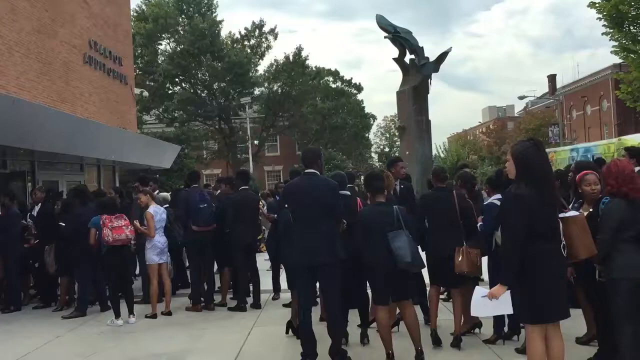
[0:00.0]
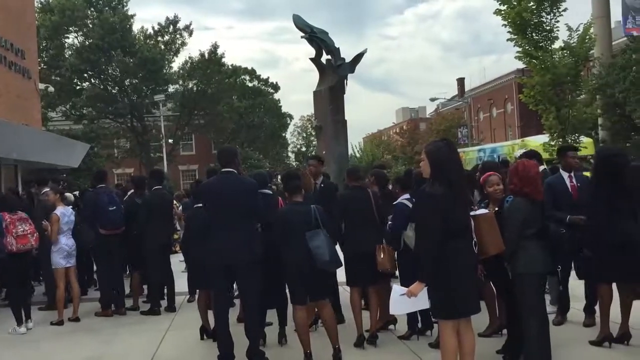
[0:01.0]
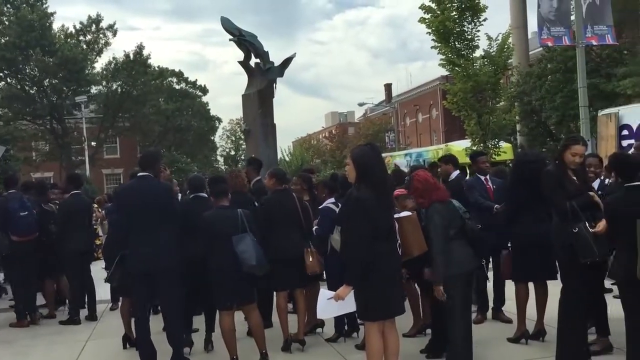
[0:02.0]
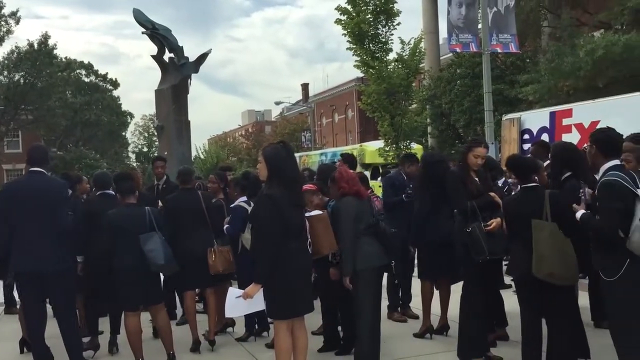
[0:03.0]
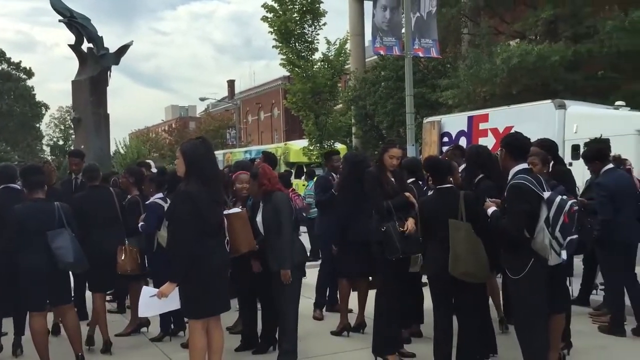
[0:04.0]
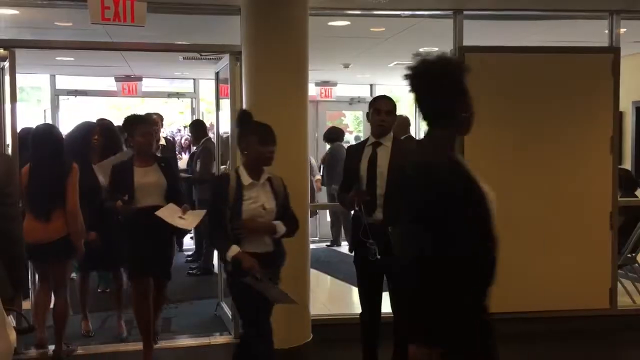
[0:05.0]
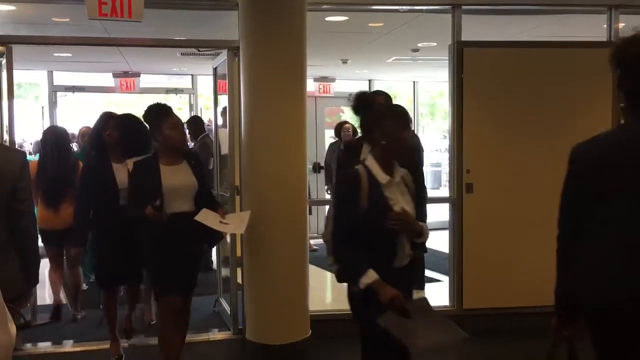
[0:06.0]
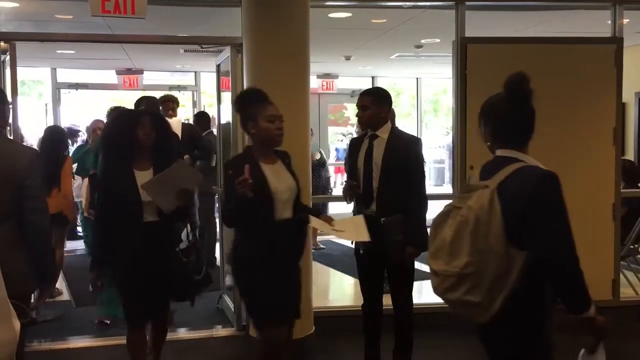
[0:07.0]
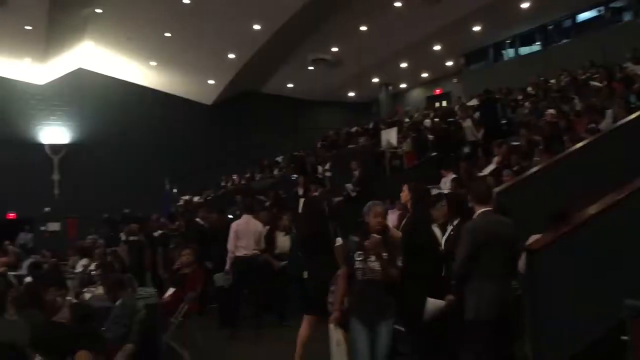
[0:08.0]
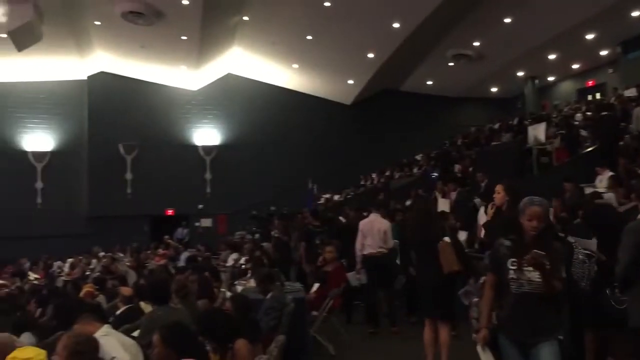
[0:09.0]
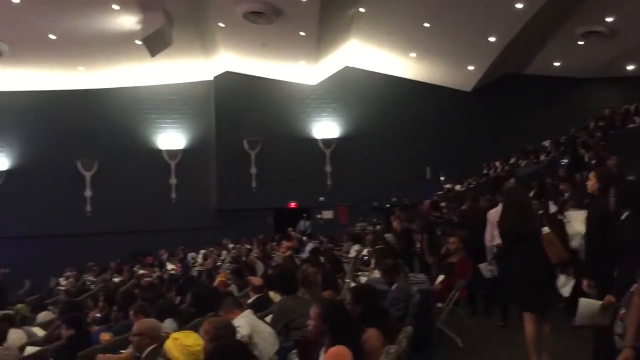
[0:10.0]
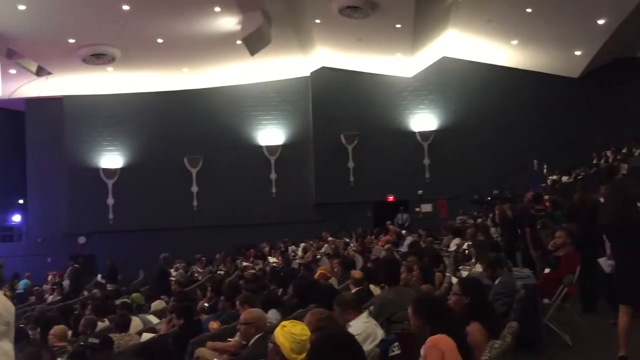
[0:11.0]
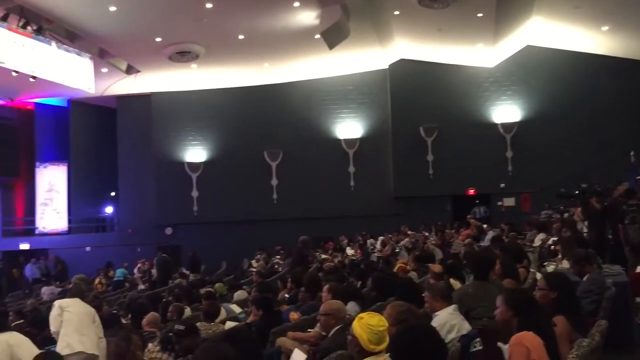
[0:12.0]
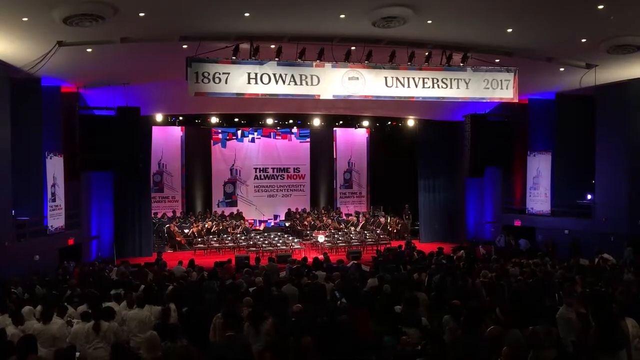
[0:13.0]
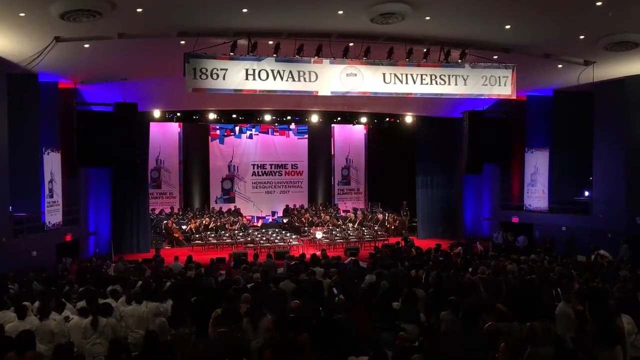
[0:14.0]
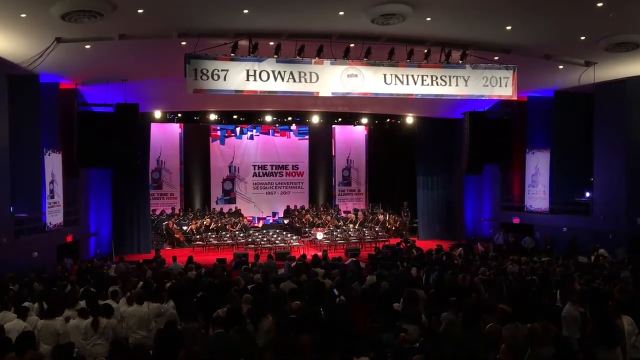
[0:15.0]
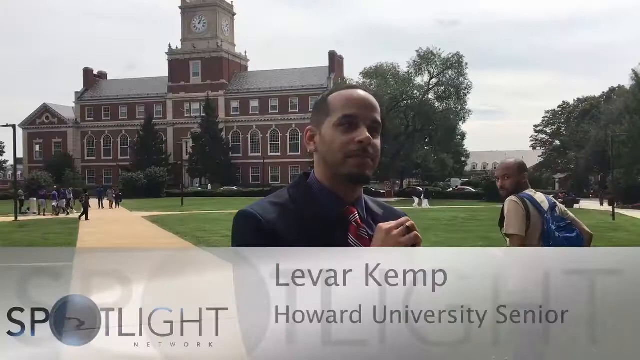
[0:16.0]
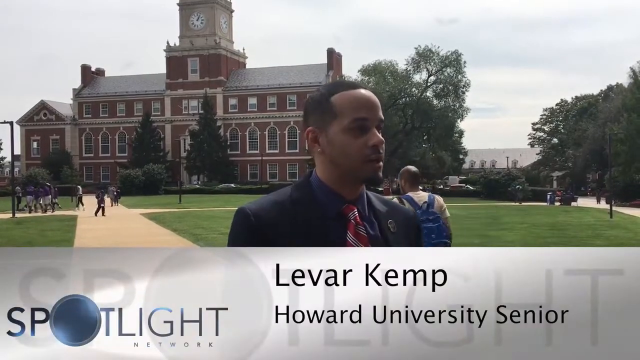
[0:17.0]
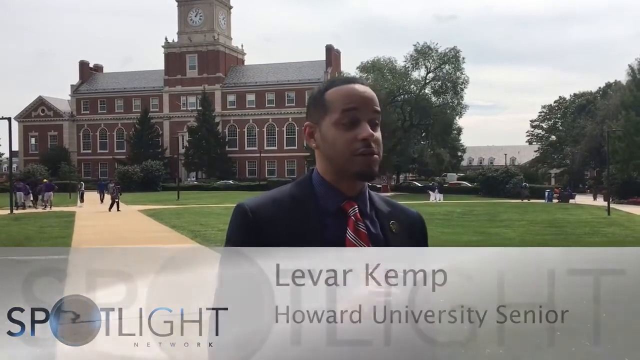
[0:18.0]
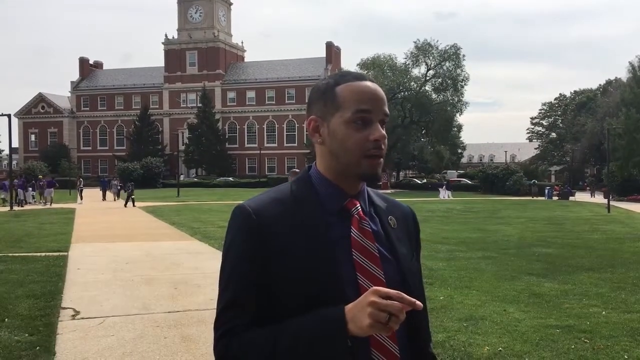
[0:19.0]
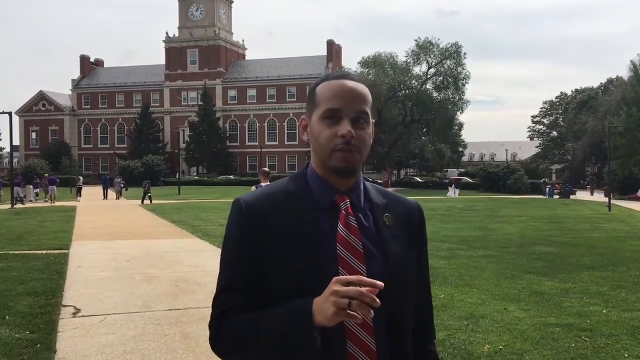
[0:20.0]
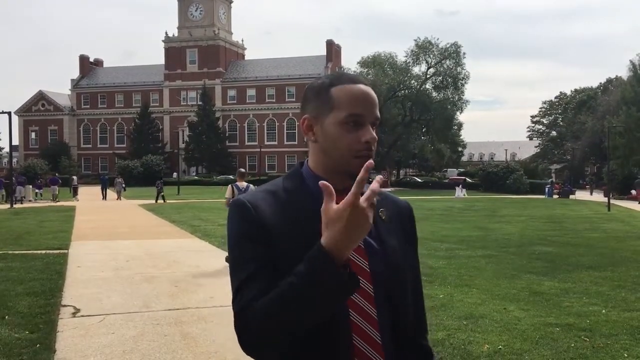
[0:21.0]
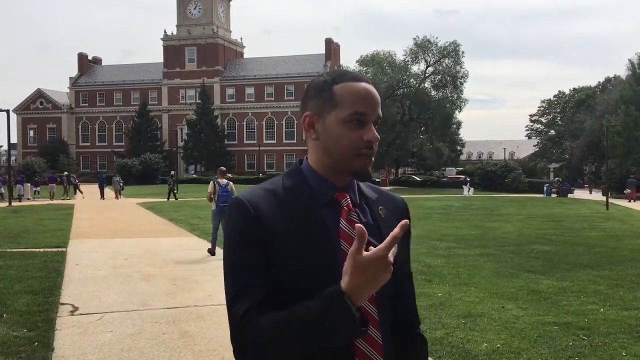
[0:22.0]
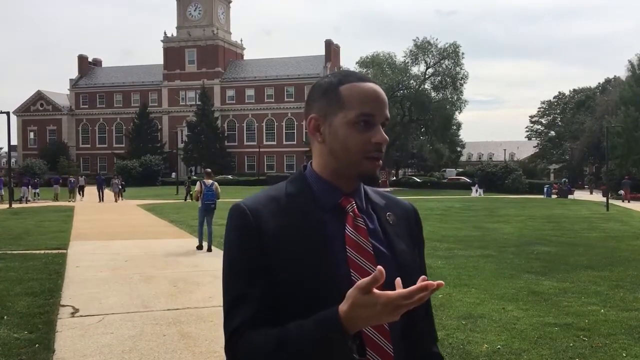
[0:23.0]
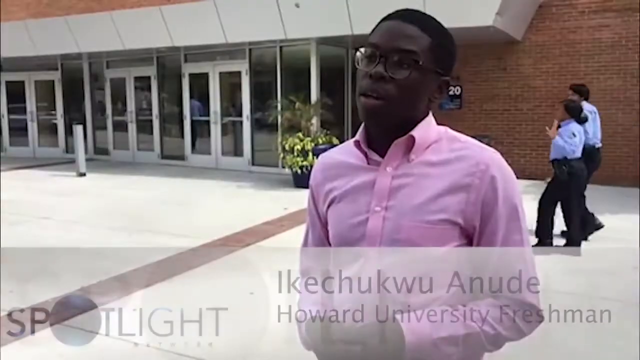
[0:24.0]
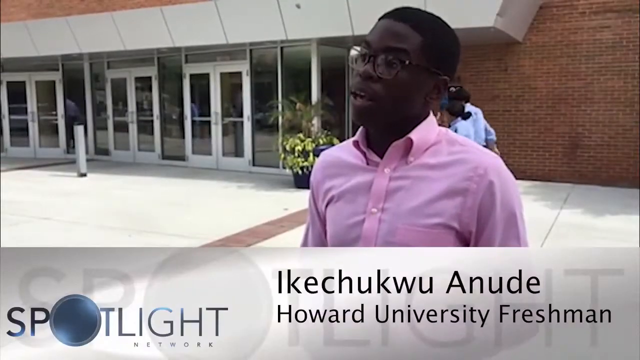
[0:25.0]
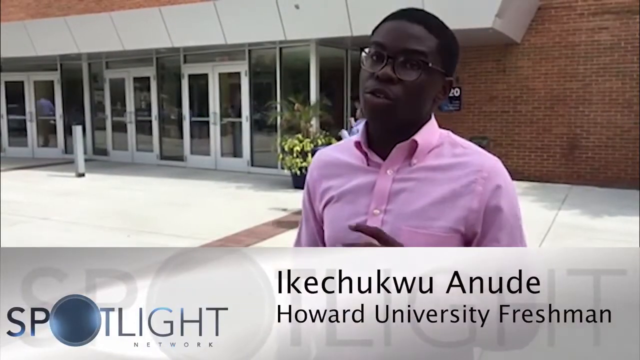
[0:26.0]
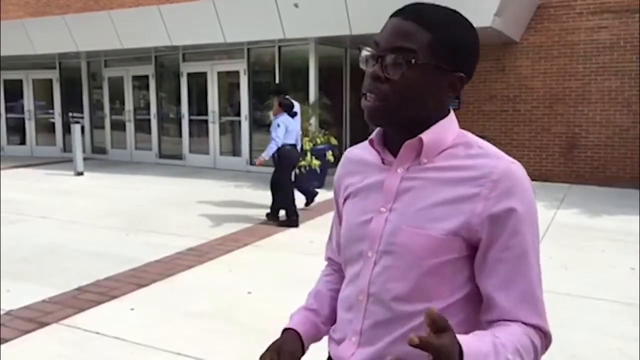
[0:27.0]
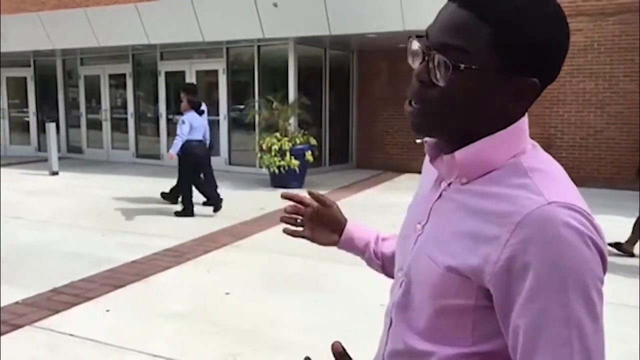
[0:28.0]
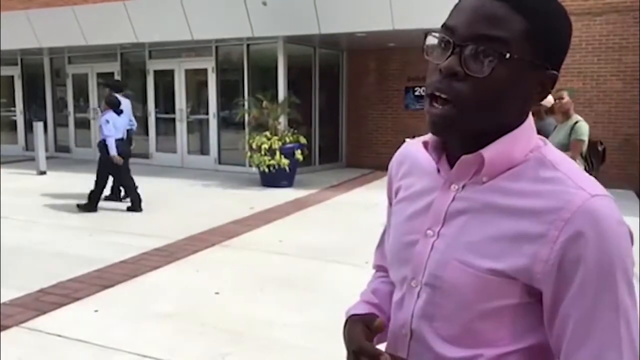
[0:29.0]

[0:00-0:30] The front of a building, apparently an auditorium, is shown. Inside, a sign reads "Howard University," so the setting seems to be the Howard University campus. The crowd is predominantly African-American, and most people are in fairly formal dress. People are interviewed outside what appears to be the auditorium, at a gathering that is perhaps celebrating some kind of anniversary for Howard University. At first a very large group is gathered outside, mostly in formal business attire, and some of them look to be students. They are gathered around a memorial in the center, out in front of the building. The scene then switches to people entering the building and, inside the auditorium, going down the steps and finding their seats. A Howard University banner from 2017 is visible, and a sign in the back behind the stage says "time is now." Outside again, people who seem to be students are interviewed. The first, an African-American man in a suit and tie, is interviewed in front of what seems to be the main part of the campus. The second, a younger man wearing glasses and a pink shirt, is then interviewed.